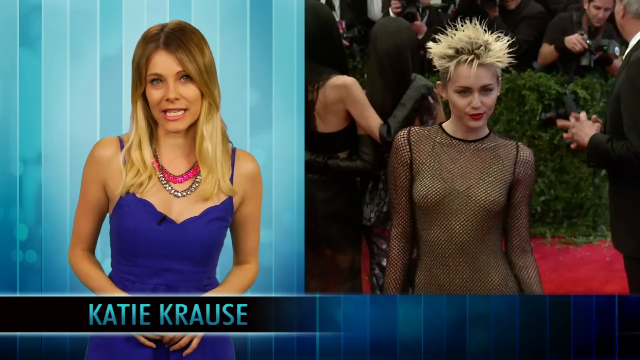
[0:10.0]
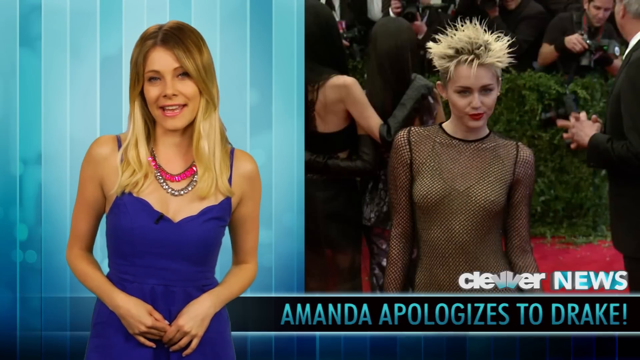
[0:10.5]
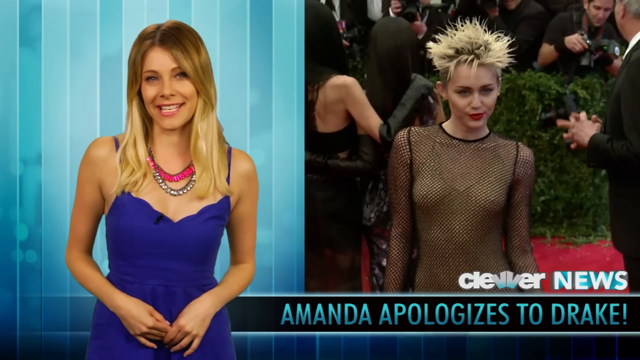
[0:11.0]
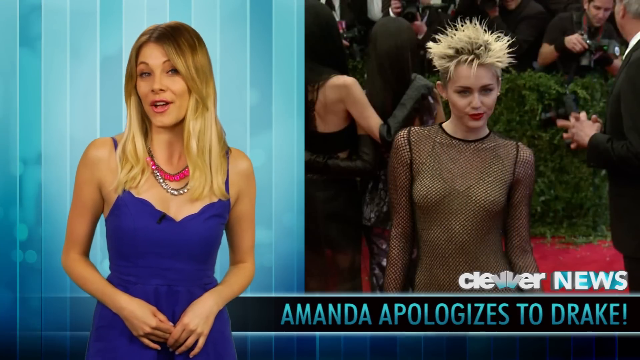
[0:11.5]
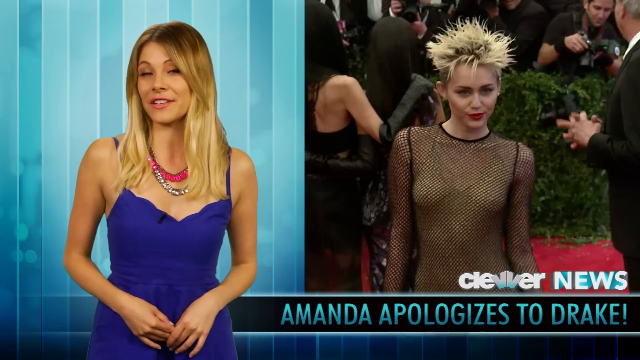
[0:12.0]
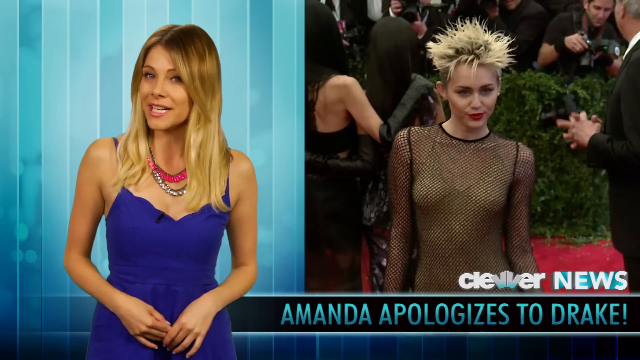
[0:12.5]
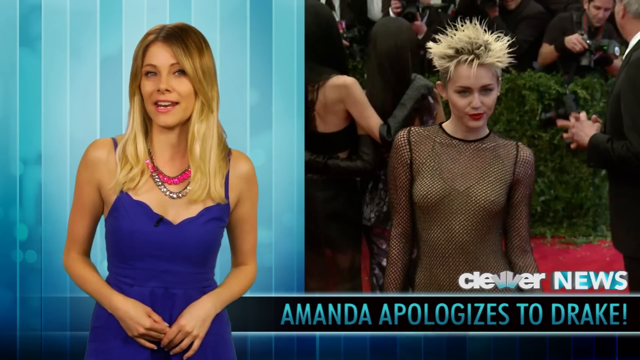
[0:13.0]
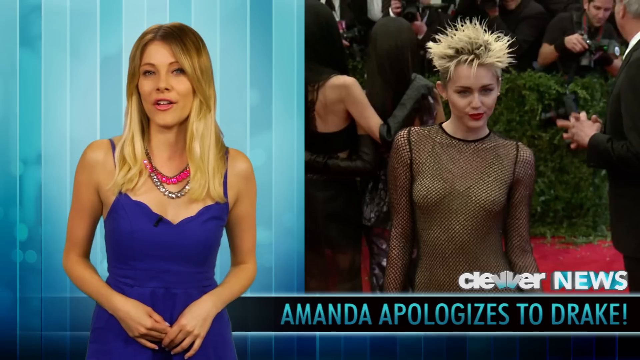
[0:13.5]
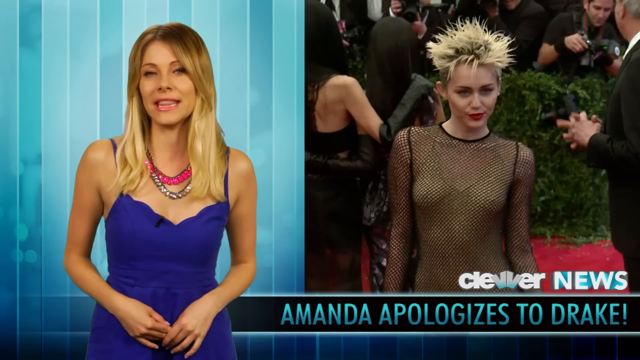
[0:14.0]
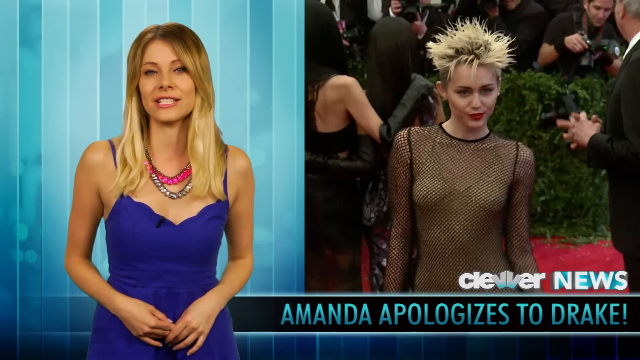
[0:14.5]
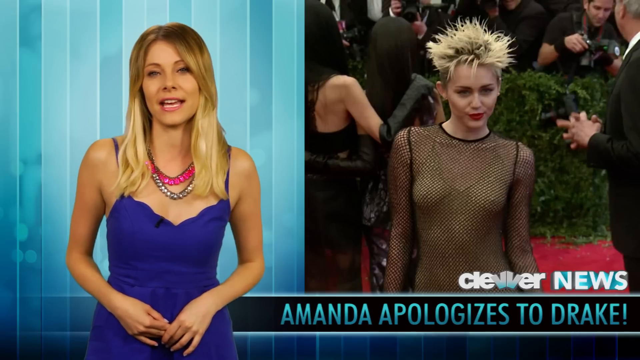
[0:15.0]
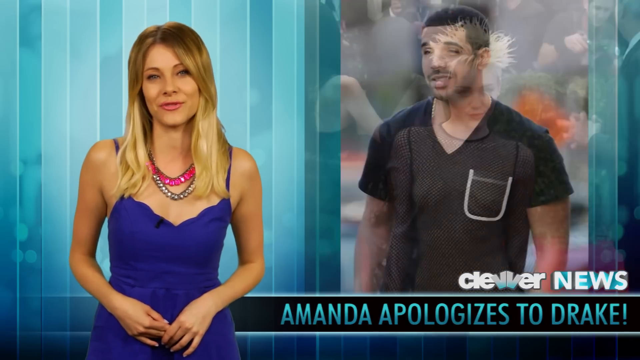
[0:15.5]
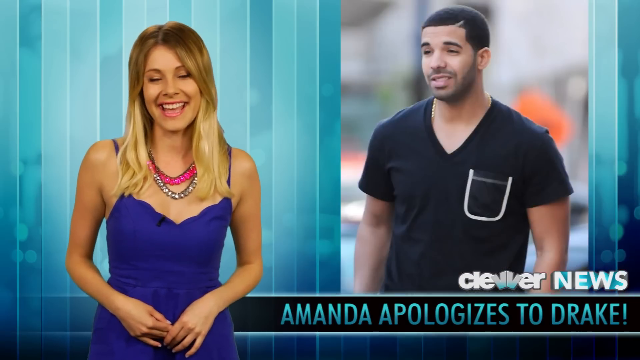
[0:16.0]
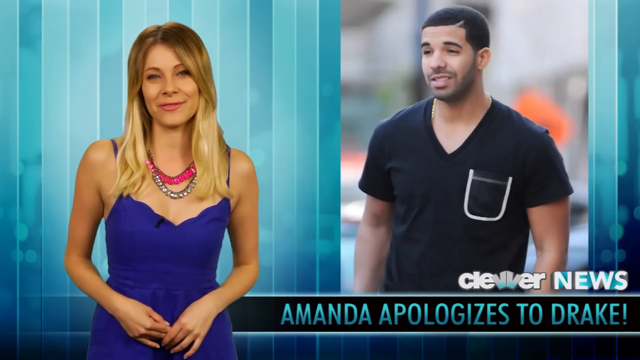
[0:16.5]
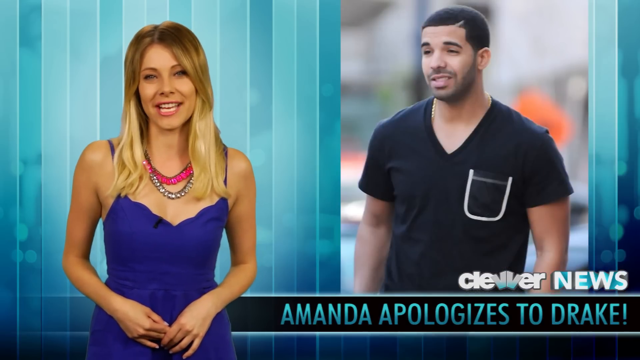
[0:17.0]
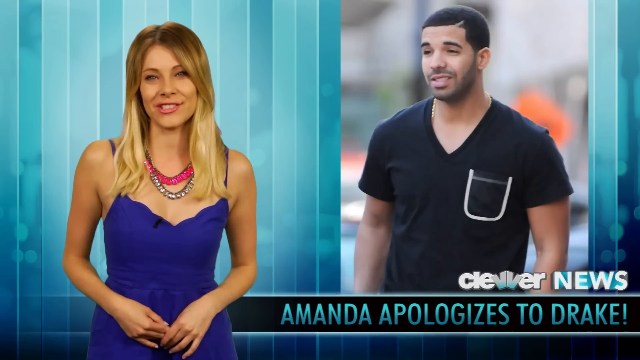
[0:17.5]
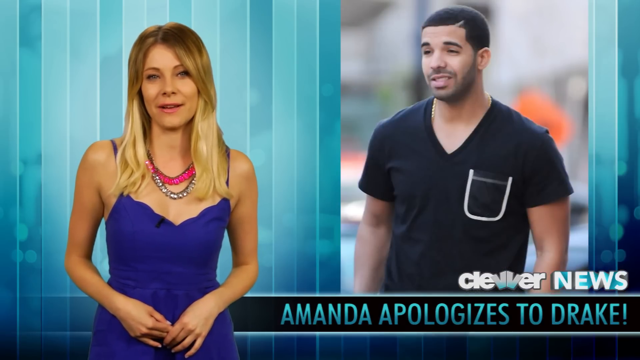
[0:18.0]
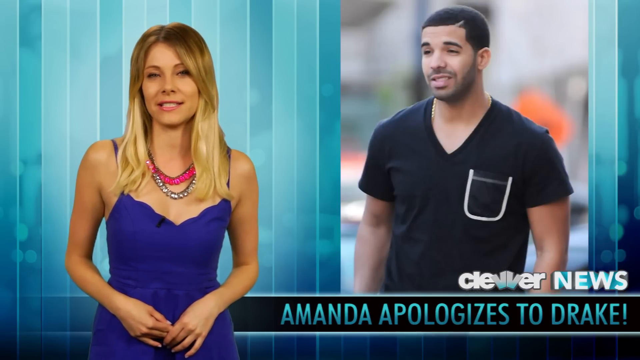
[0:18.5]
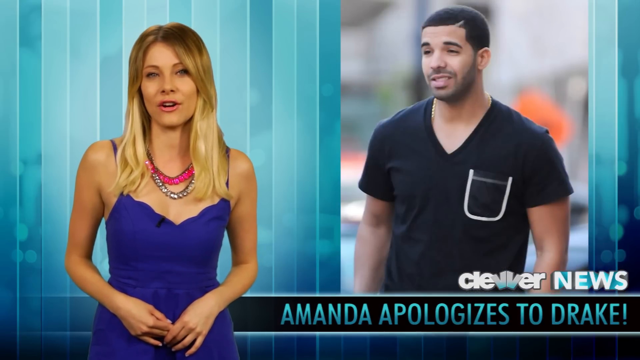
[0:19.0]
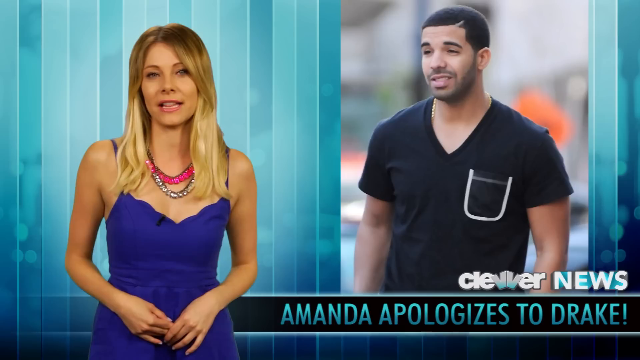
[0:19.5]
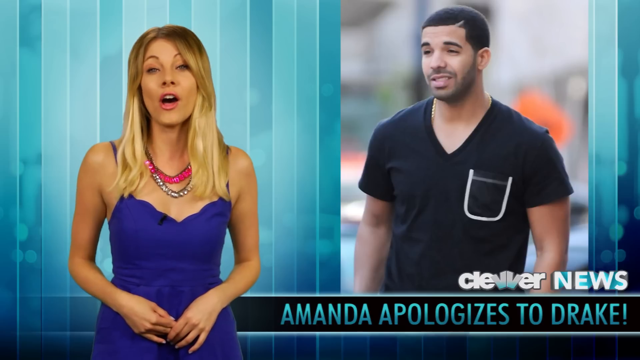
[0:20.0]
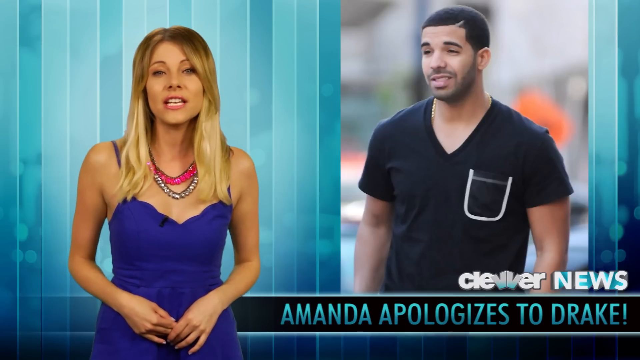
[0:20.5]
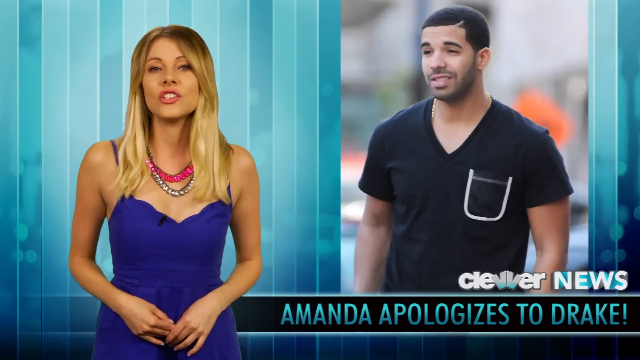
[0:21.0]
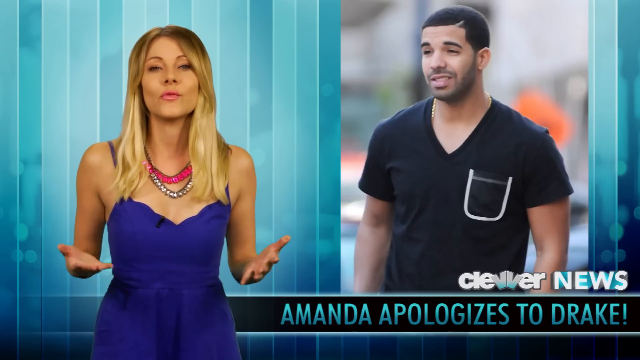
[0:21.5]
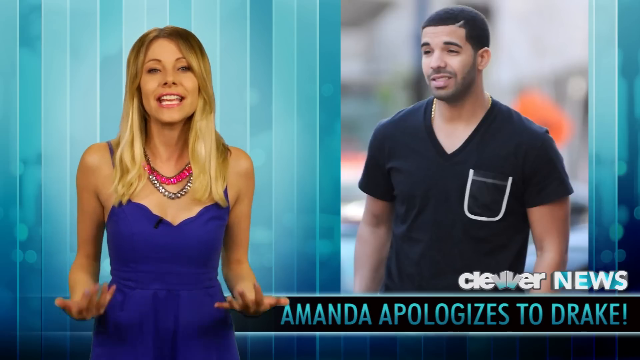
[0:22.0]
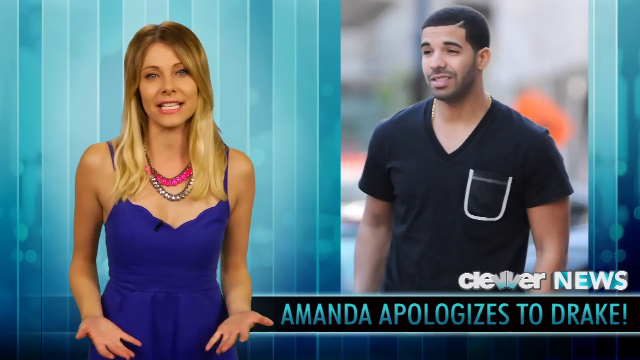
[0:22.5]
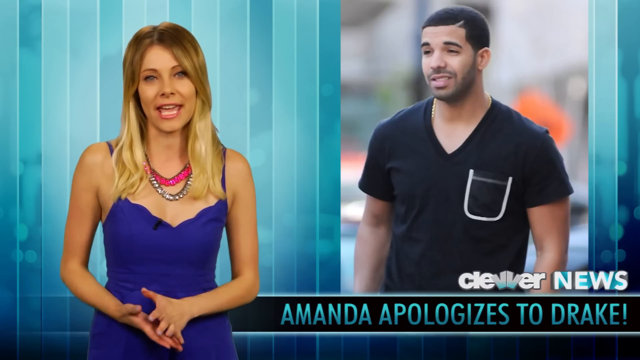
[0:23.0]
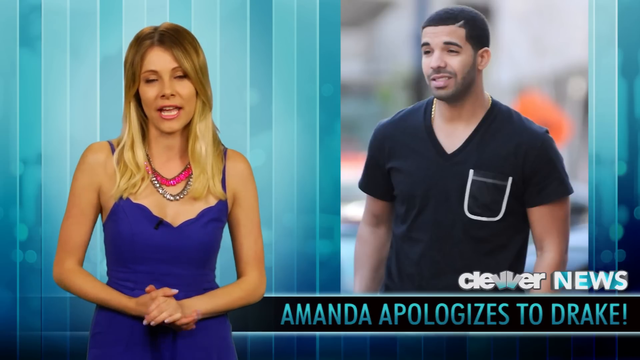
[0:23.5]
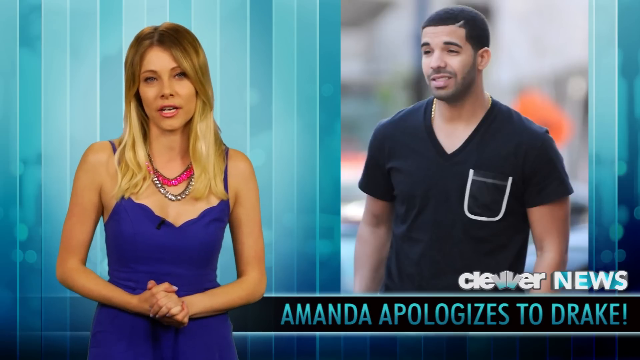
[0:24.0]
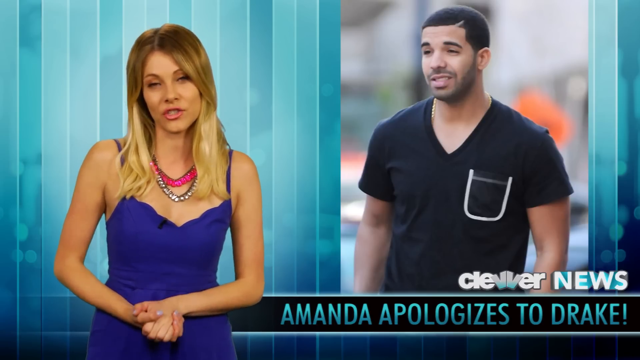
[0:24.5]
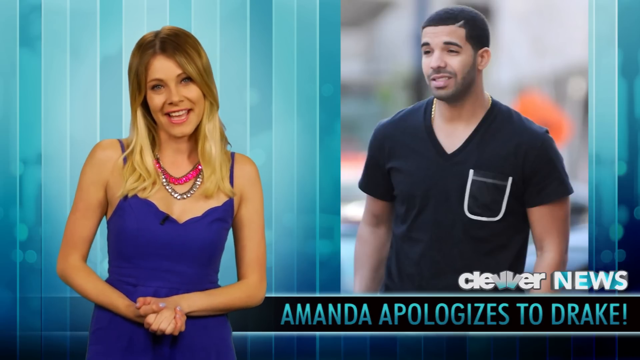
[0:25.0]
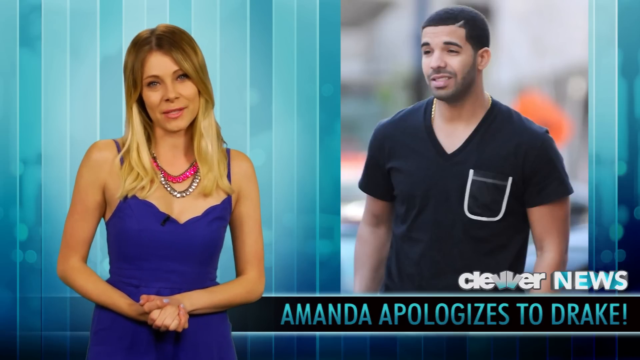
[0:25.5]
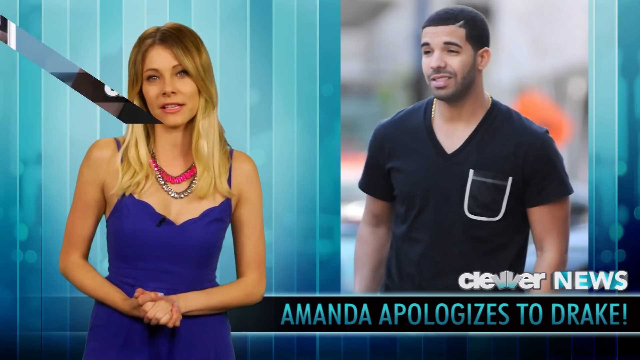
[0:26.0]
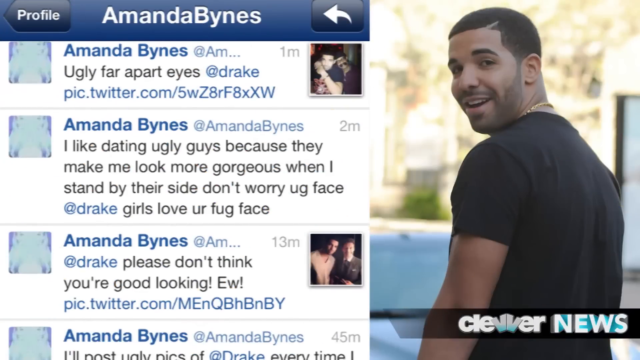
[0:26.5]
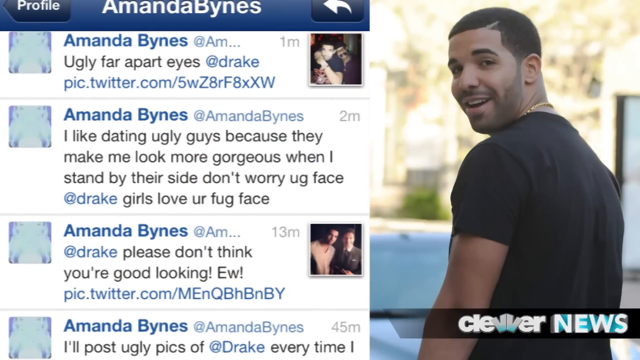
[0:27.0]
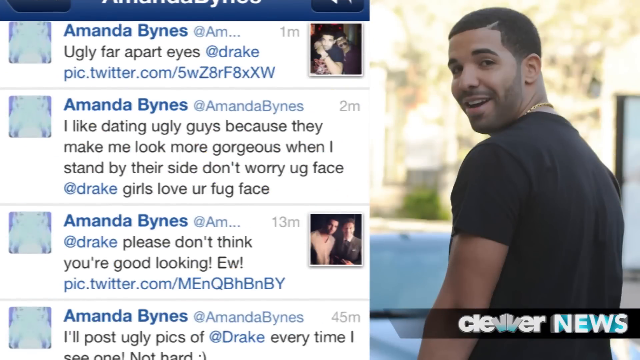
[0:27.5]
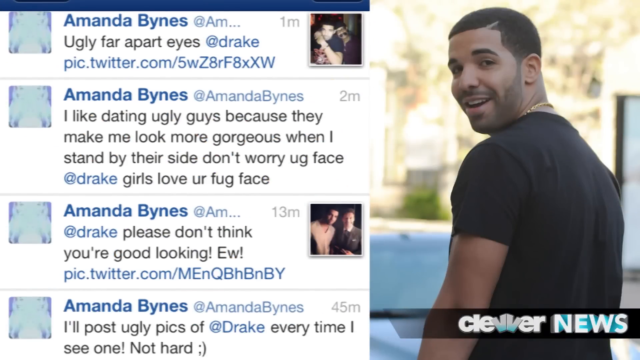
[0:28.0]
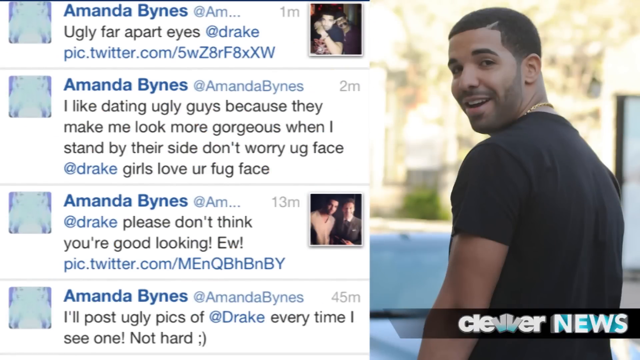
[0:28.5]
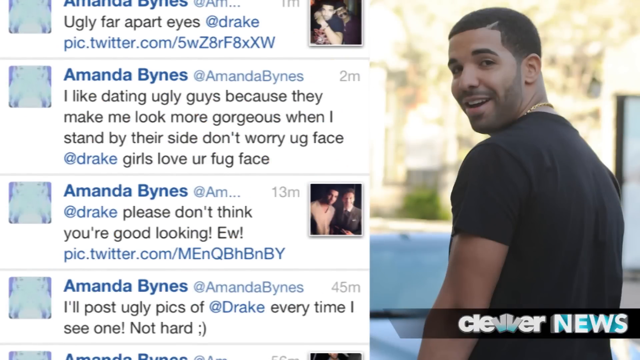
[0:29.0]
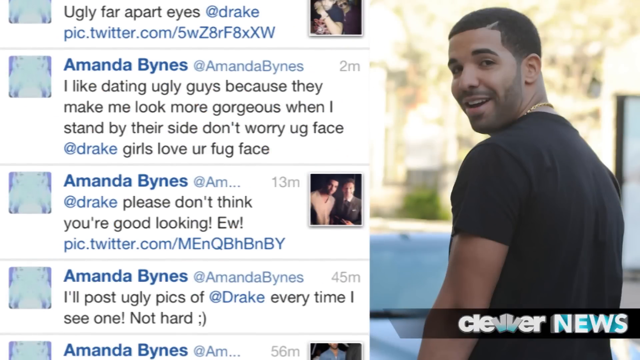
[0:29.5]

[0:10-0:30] A lady with blonde hair, named Katie Krause, appears, and Miley Cyrus is shown in the next picture. Text reads "Amanda apologizes to Drake" and "Clever News," apparently the name of the news channel reporting the celebrity news. A picture of Drake shows him outside walking, wearing a black shirt, with a short haircut and what seems to be a chain around his neck. The lady talking has blonde hair, a pink necklace and a blue top, and is very lean and skinny. Then what appear to be tweets from Amanda Bynes appear, reading "ugly far apart eyes at Drake," "I like dating ugly guys because they make me look more gorgeous when I stand by their side," "please don't think you're good looking," and finally "I'll post ugly pics of Drake every time I see them, not hard."